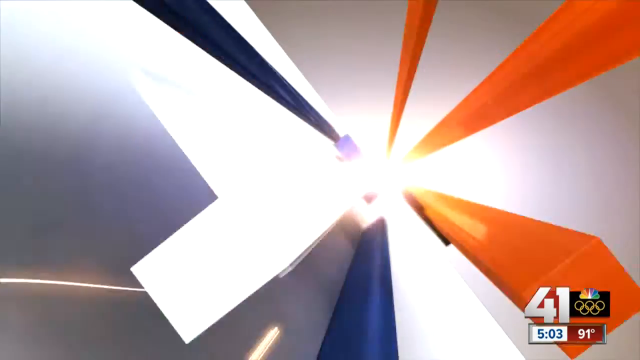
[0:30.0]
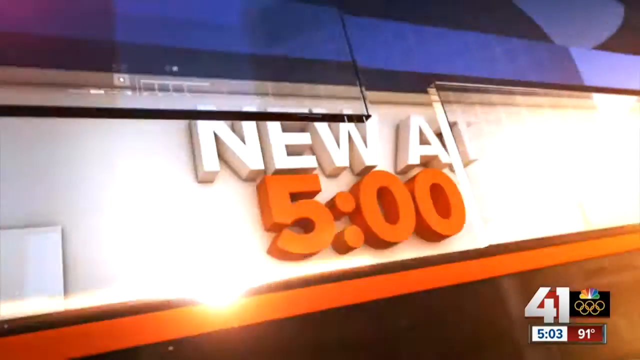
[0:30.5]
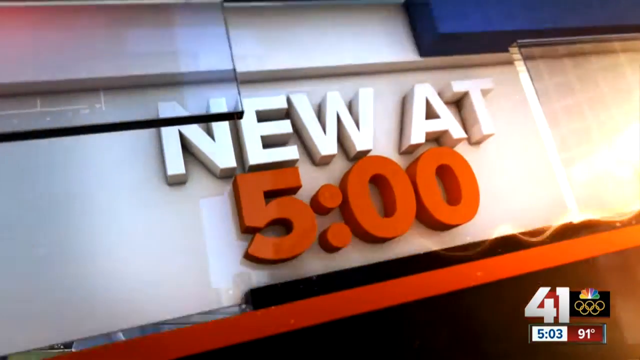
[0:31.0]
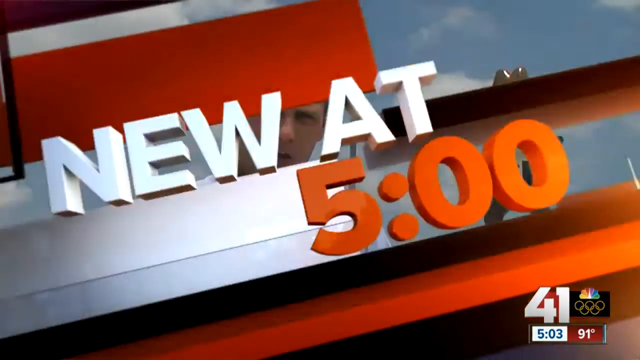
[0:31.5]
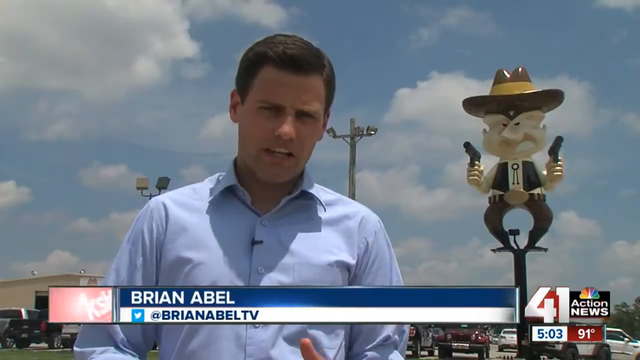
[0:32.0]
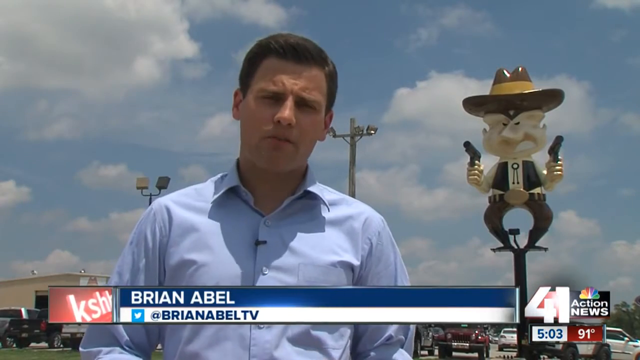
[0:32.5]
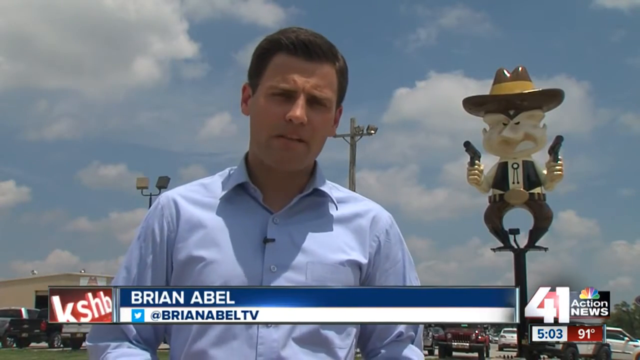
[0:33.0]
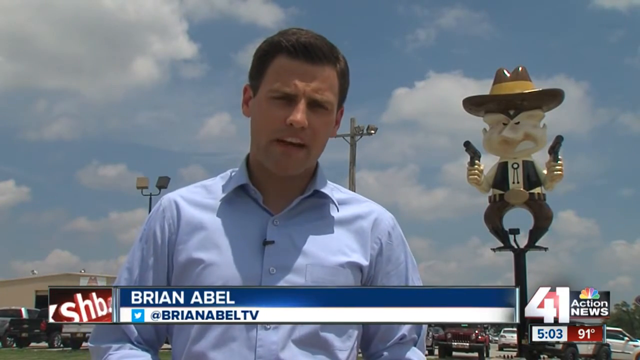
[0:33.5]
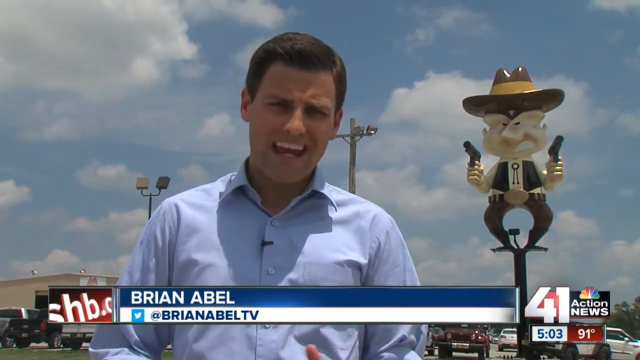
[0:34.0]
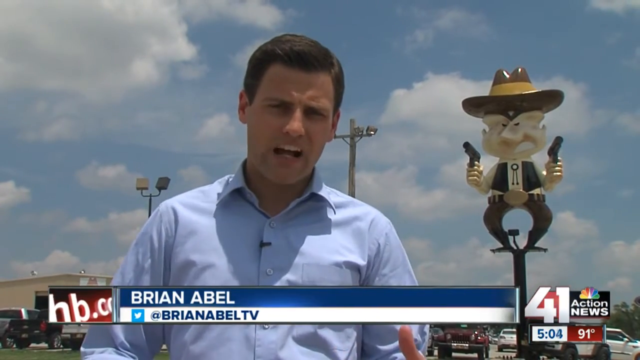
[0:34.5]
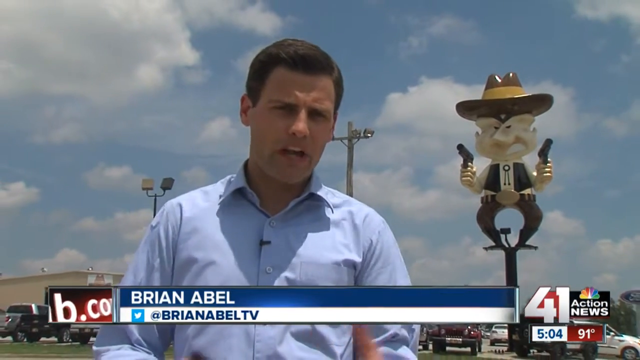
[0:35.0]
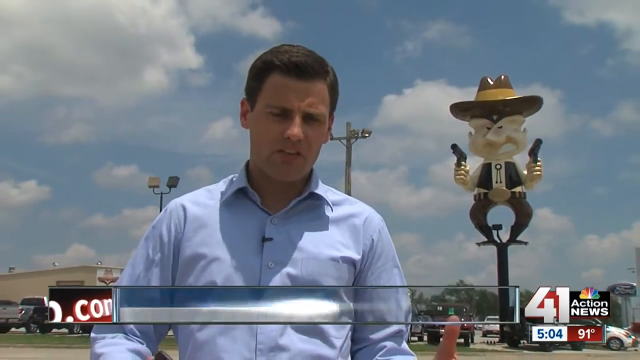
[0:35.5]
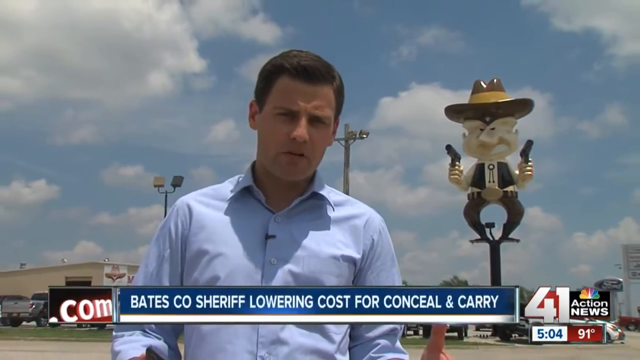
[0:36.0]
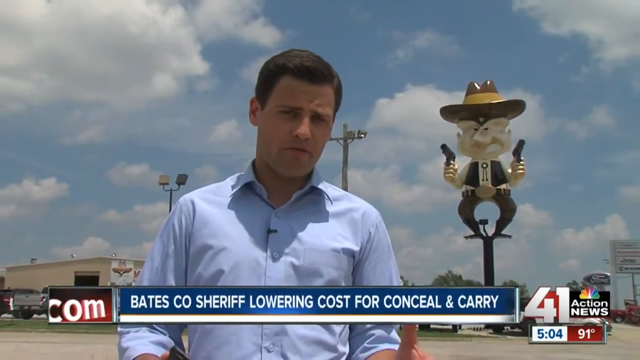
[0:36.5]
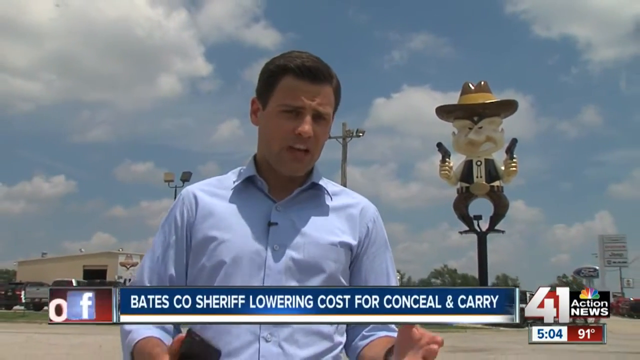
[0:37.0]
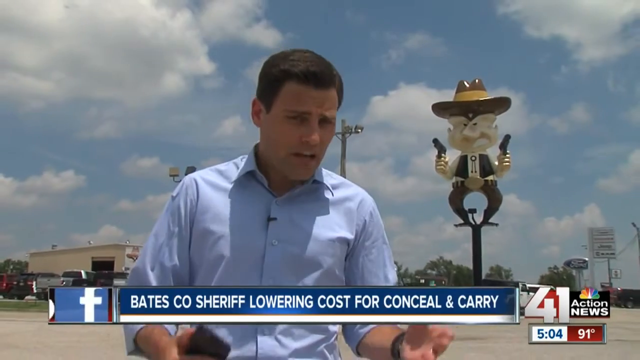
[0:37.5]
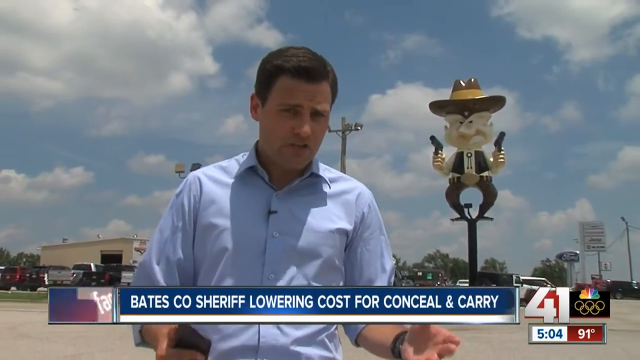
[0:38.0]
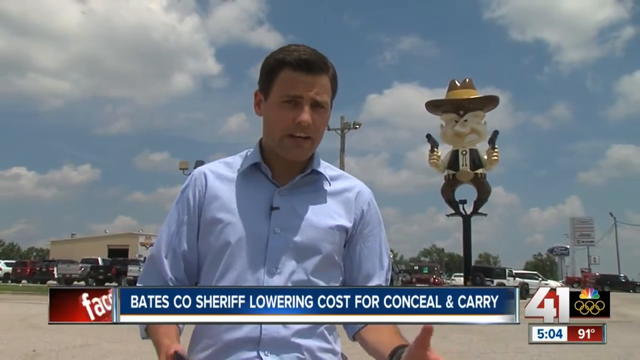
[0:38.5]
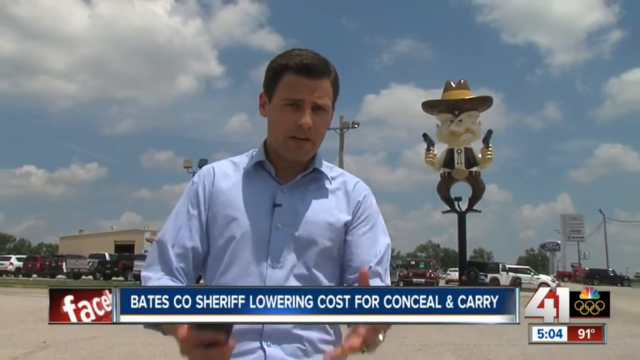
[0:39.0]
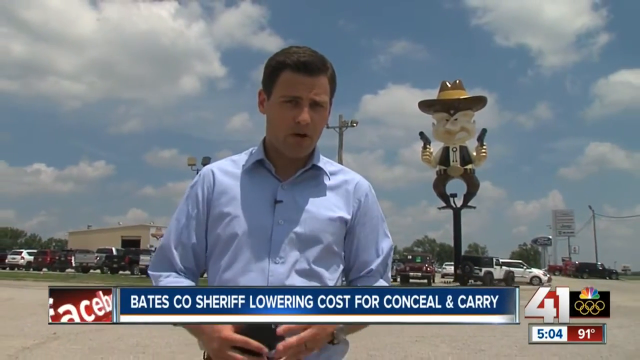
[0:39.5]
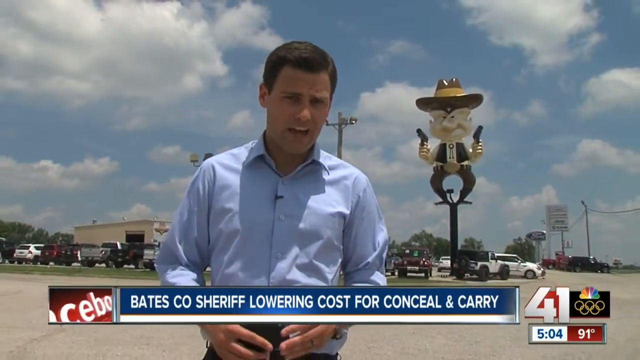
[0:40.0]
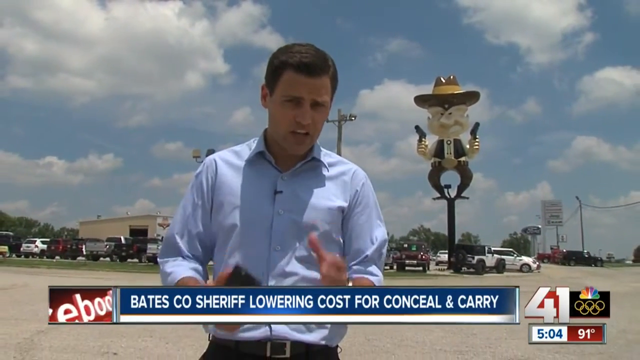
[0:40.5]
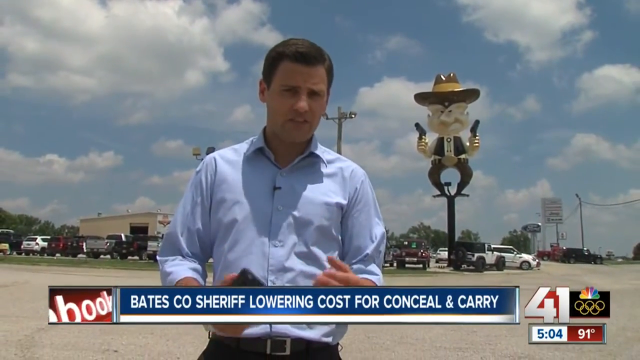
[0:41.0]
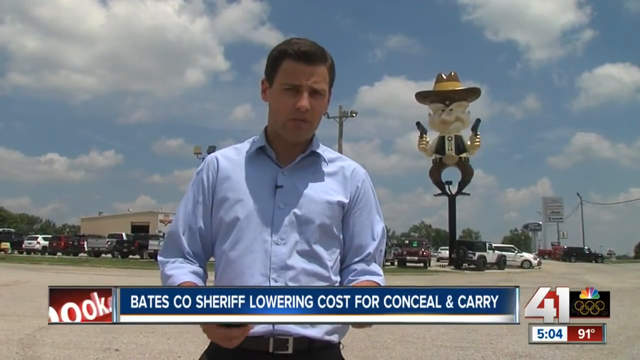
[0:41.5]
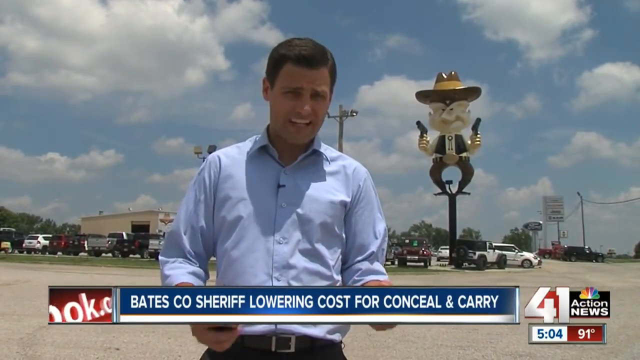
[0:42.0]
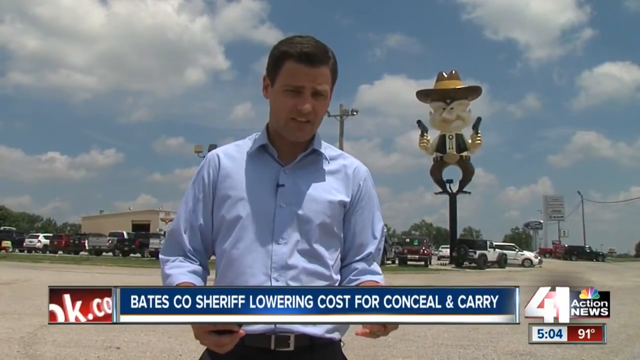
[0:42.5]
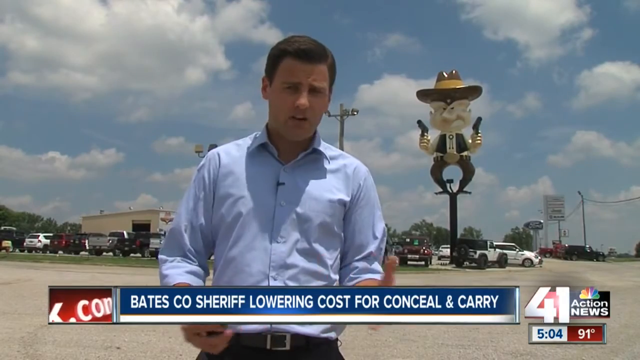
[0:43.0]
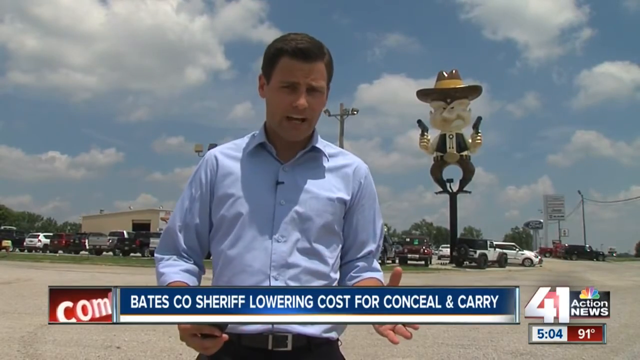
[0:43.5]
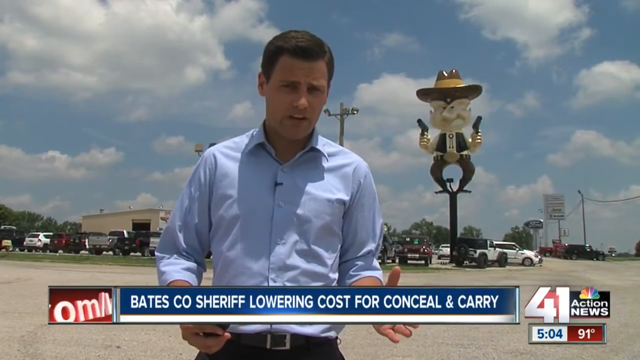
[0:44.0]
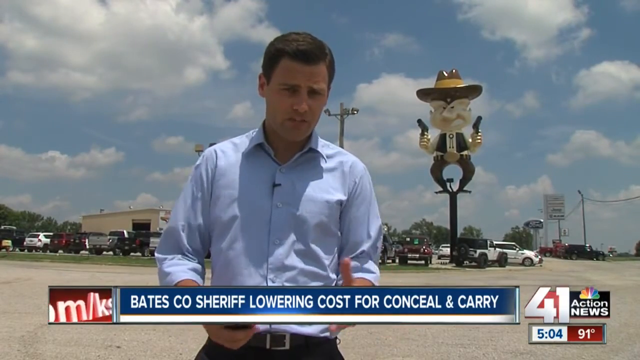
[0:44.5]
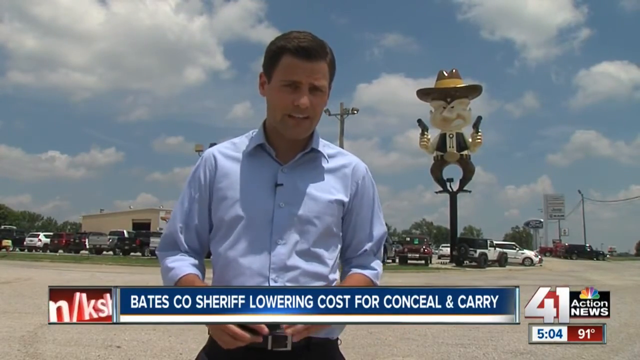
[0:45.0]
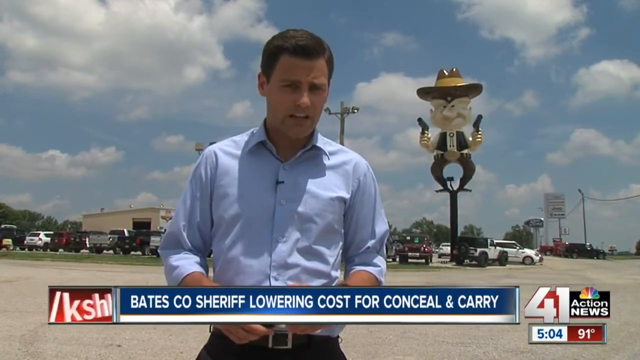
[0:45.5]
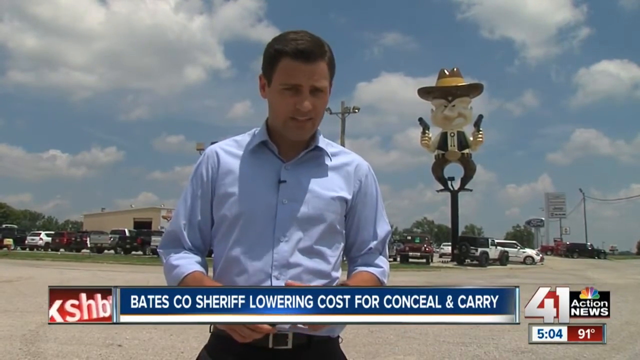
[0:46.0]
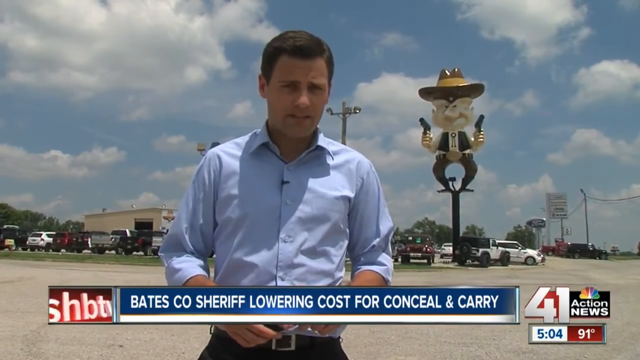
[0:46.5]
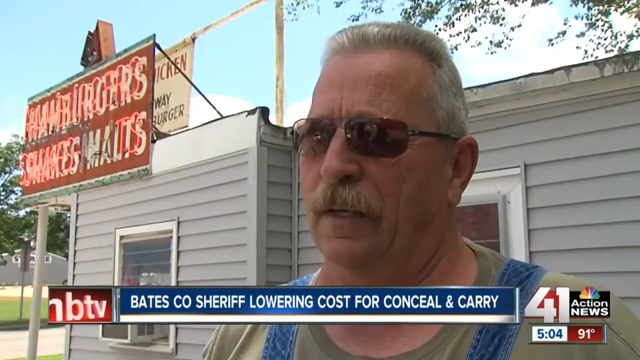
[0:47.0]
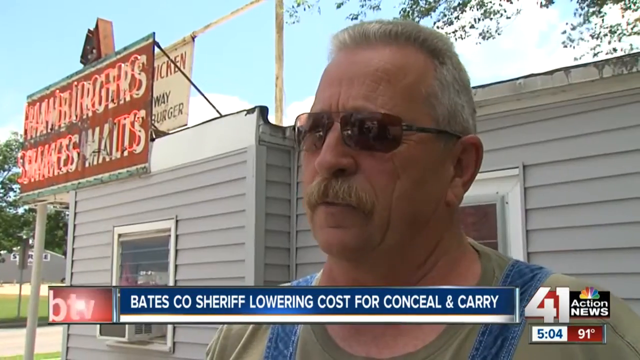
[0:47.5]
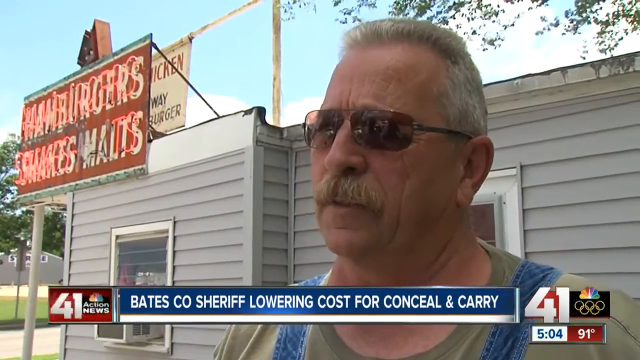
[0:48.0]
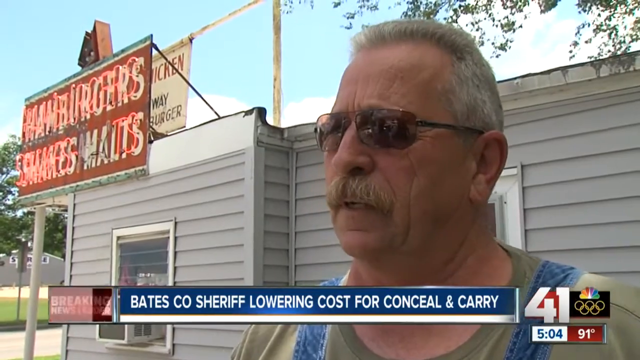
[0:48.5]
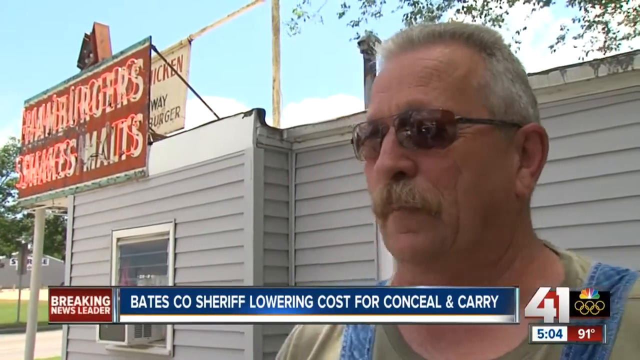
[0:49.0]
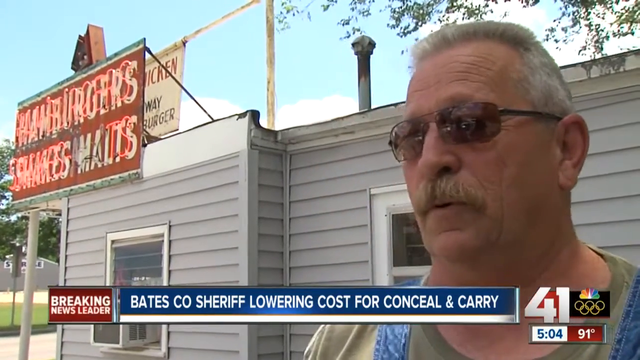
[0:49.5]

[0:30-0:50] "New at five" flashes on the screen. A man whose name is shown as Brian Abel speaks outside. He has short brown hair and wears a blue dress shirt, and behind him is what appears to be some sort of statue of a cowboy with guns pointing out. As the man talks, the camera starts to pull back. He gestures with his hands at the midpoint of his body, moving them forward while holding a phone in his right hand. Below him, text reads "Bates Co Sheriff lowering costs for conceal and carry." The video cuts to a man standing in front of a building; to the left is a lit-up sign that reads "hamburgers shakes malts." This man has short gray hair, wears sunglasses, has a beard and appears to be wearing some type of overalls as he speaks to the camera. The video then cuts briefly to another man with a long beard, standing next to the driver's door of a truck.